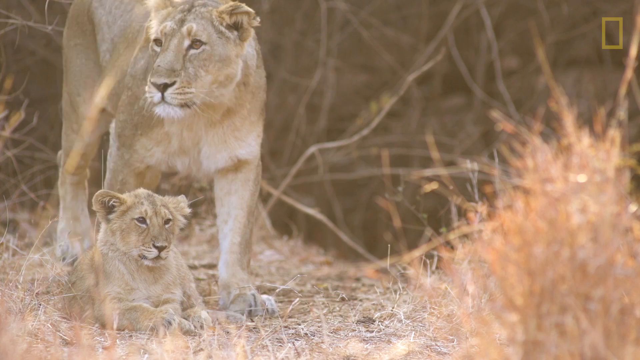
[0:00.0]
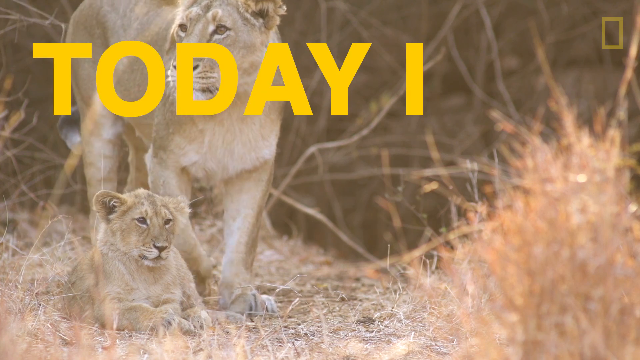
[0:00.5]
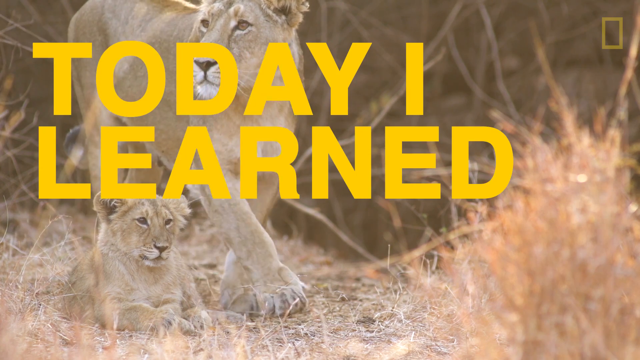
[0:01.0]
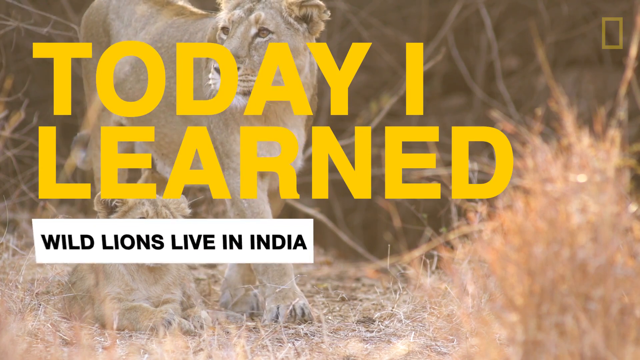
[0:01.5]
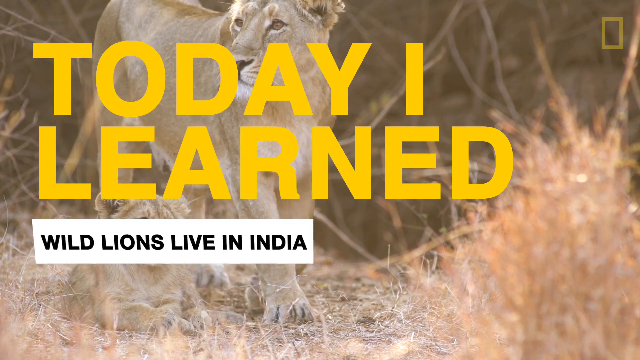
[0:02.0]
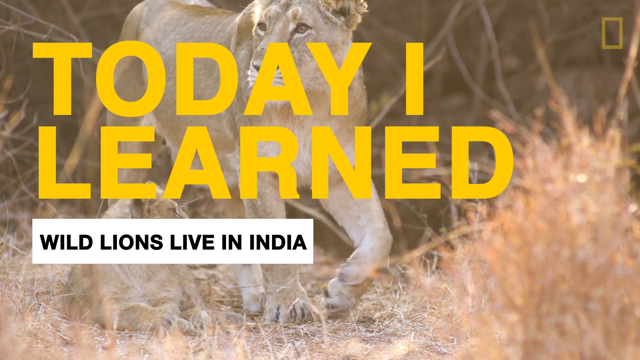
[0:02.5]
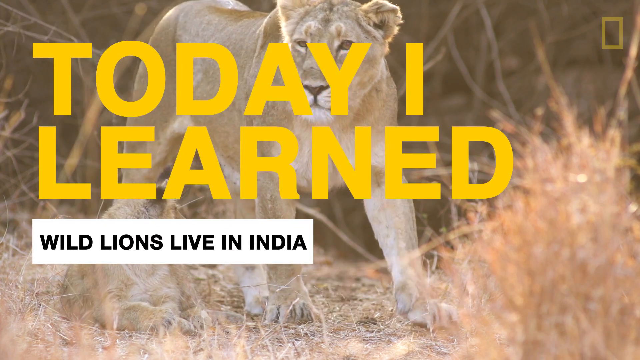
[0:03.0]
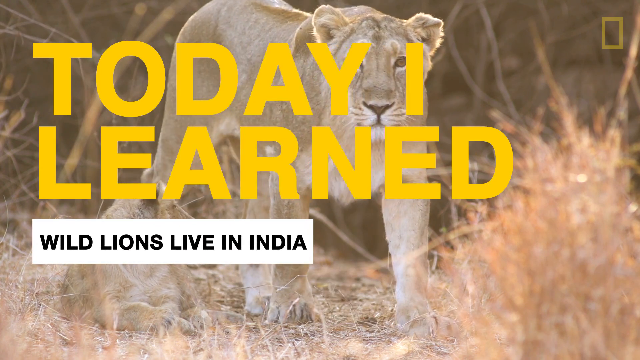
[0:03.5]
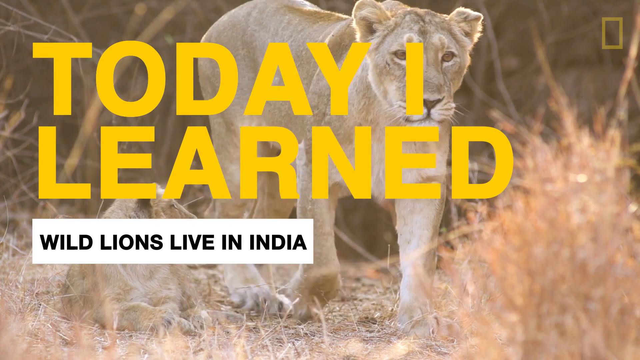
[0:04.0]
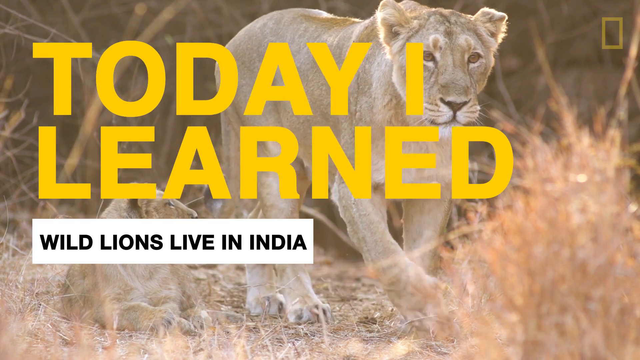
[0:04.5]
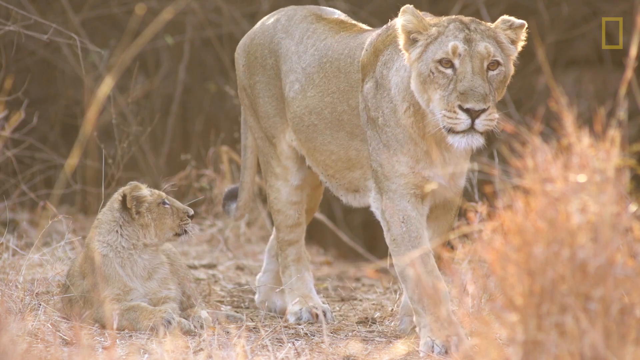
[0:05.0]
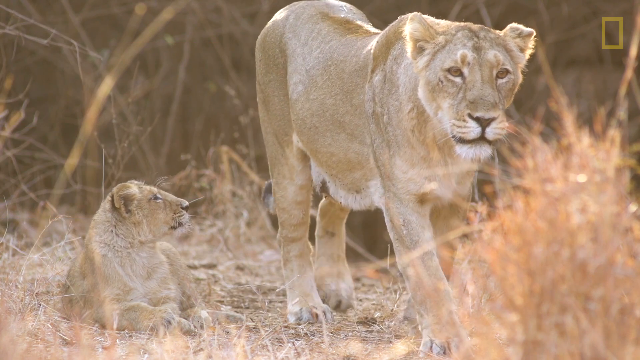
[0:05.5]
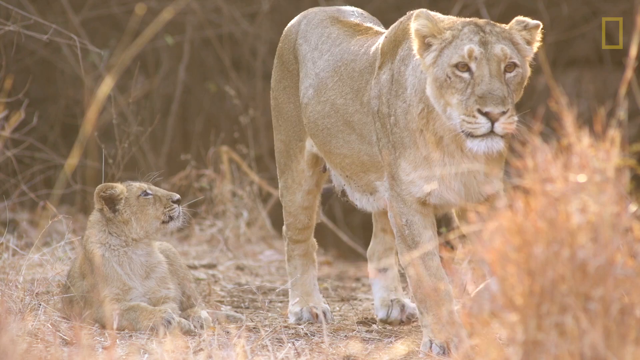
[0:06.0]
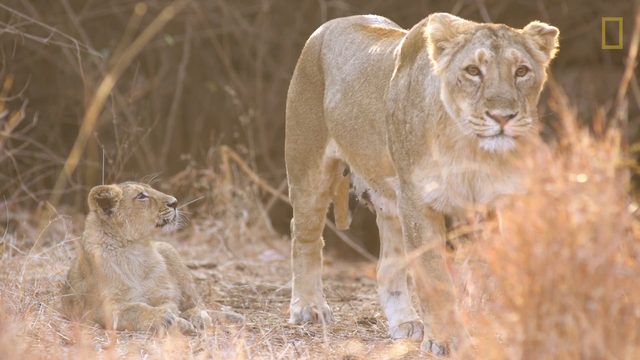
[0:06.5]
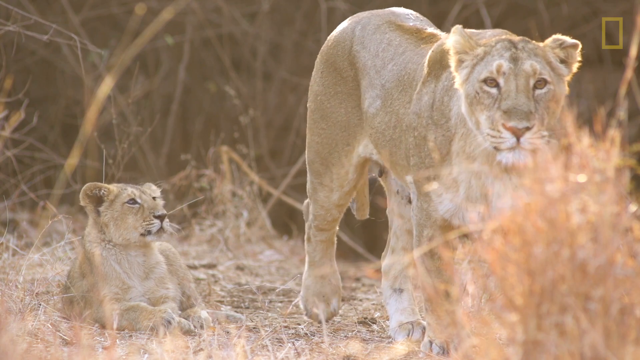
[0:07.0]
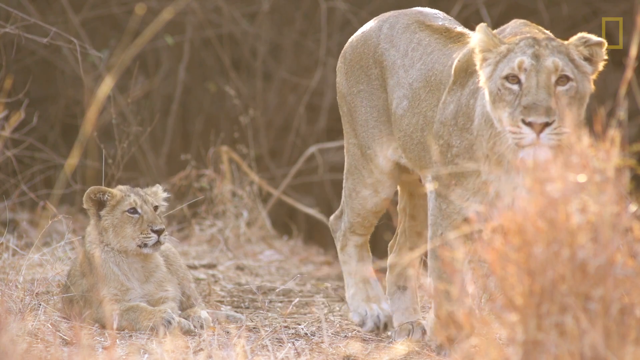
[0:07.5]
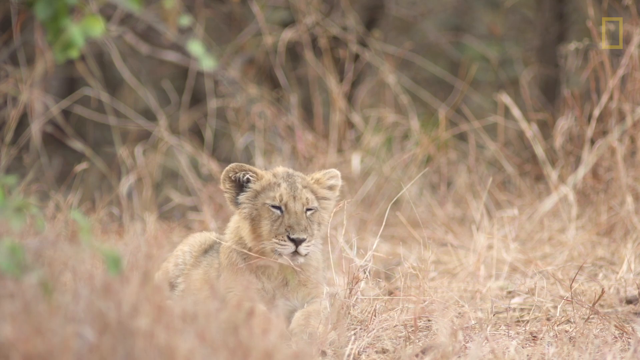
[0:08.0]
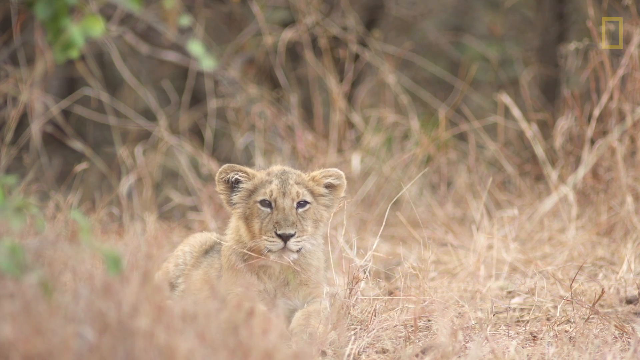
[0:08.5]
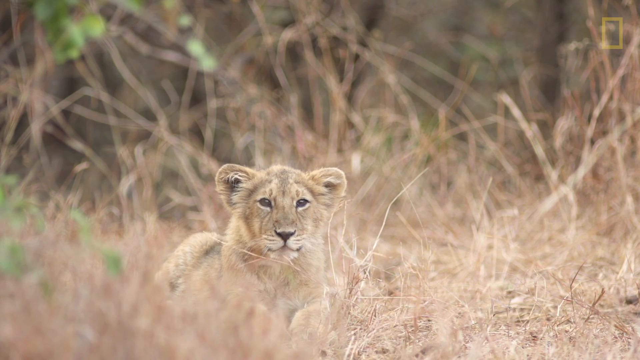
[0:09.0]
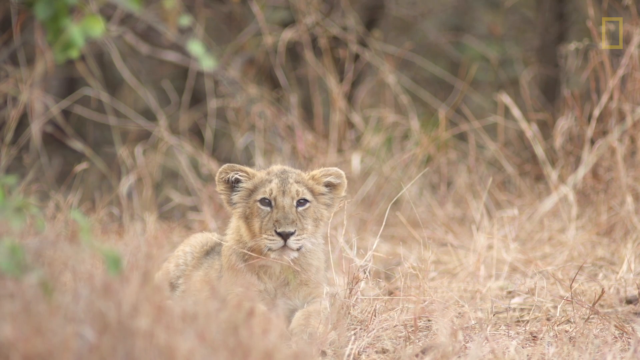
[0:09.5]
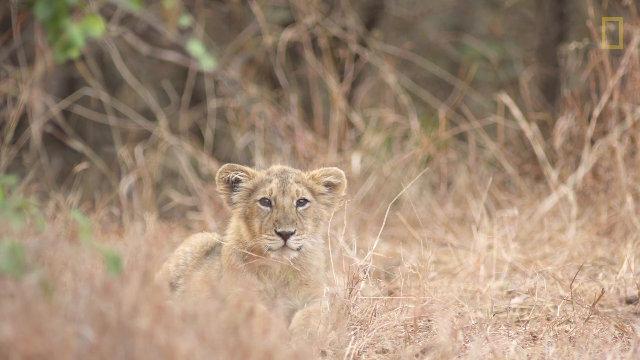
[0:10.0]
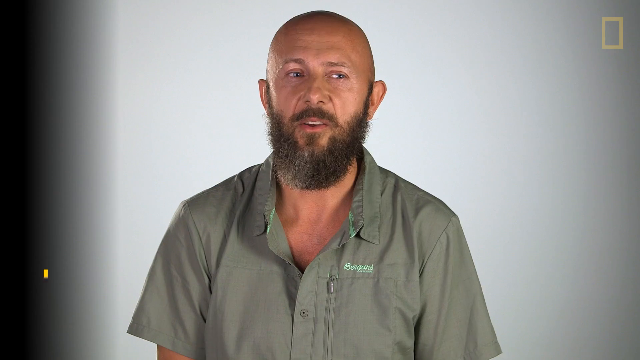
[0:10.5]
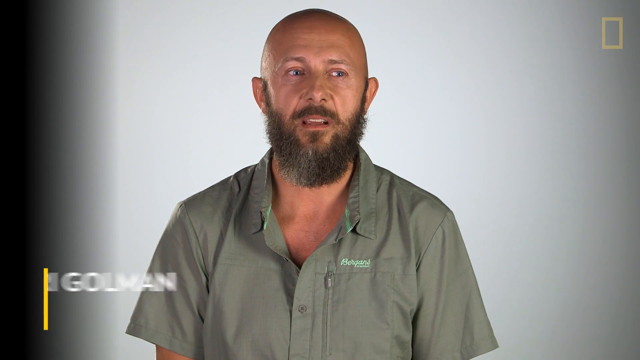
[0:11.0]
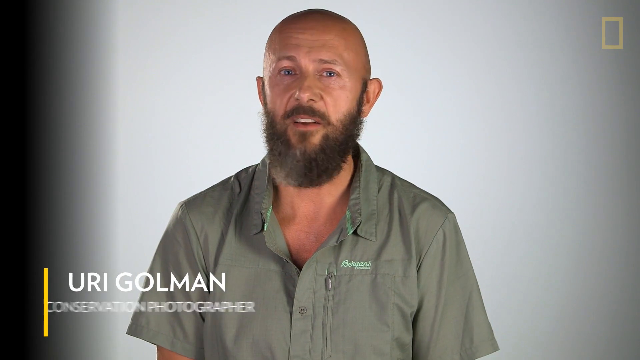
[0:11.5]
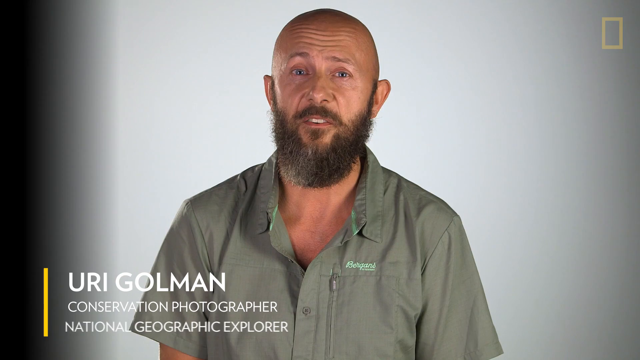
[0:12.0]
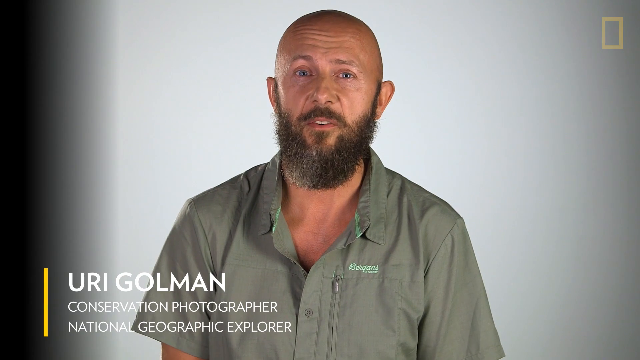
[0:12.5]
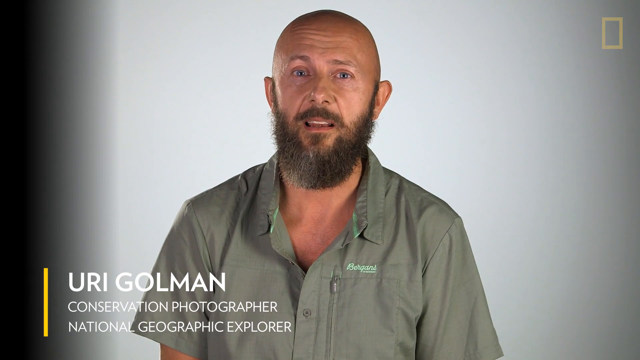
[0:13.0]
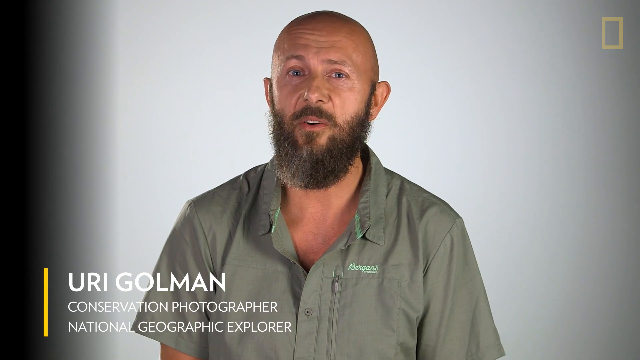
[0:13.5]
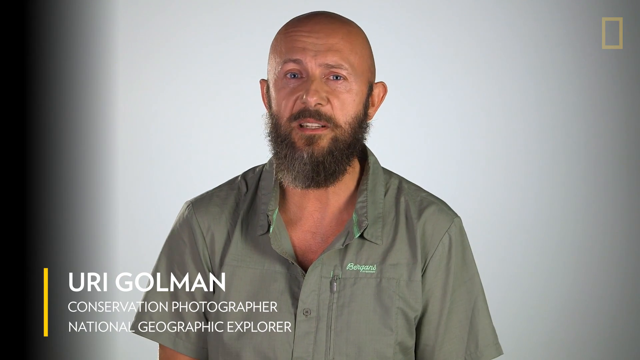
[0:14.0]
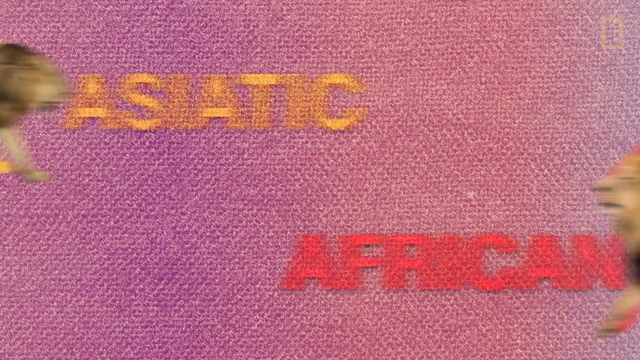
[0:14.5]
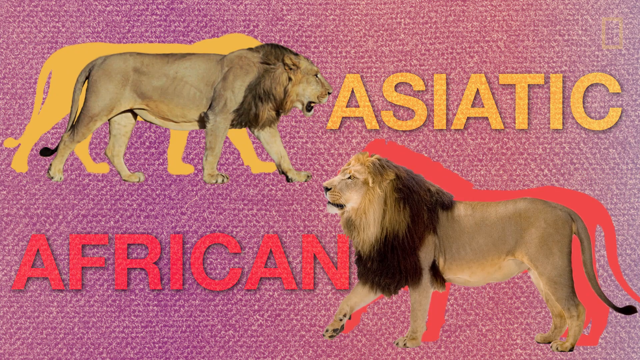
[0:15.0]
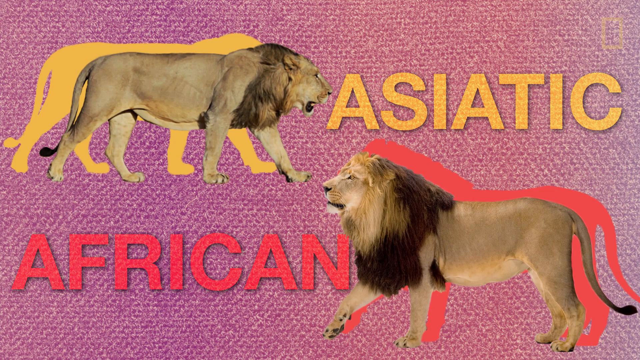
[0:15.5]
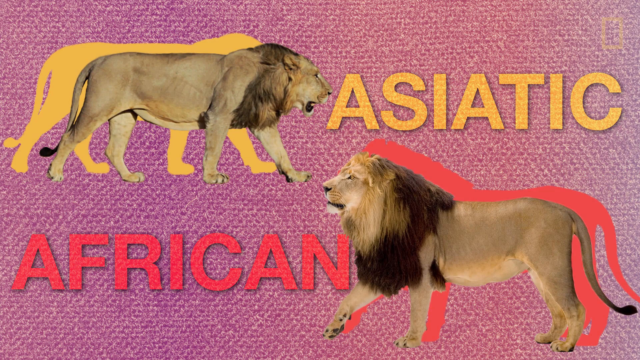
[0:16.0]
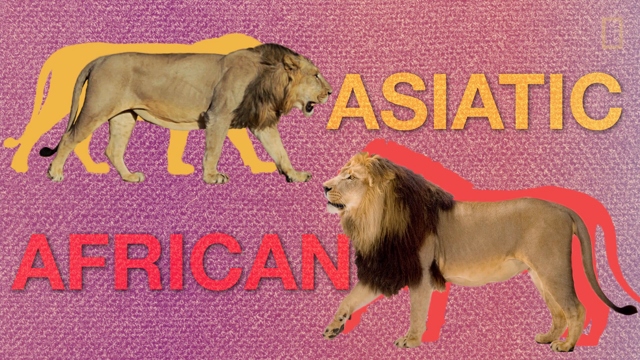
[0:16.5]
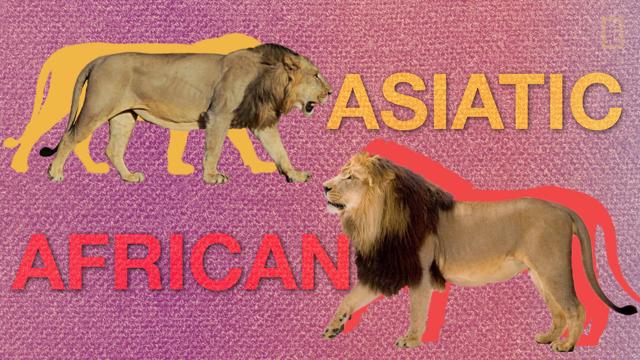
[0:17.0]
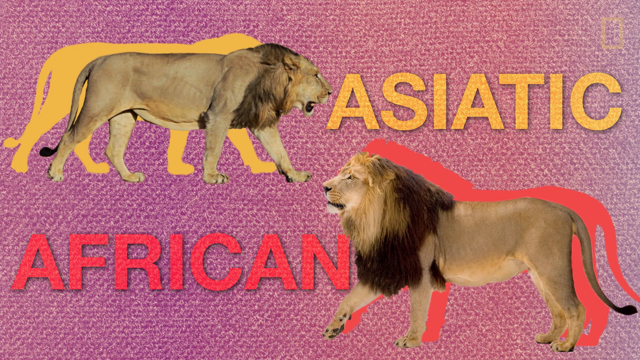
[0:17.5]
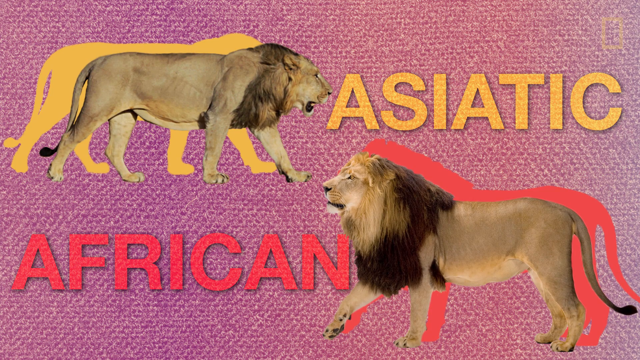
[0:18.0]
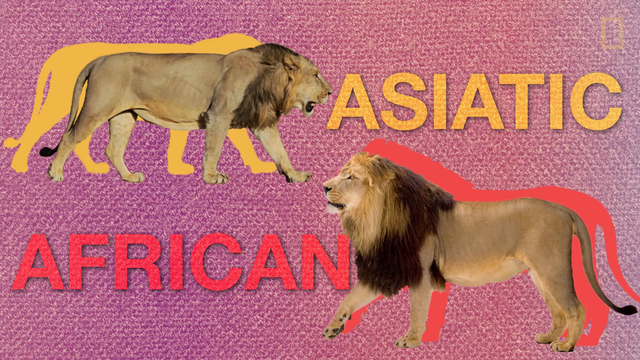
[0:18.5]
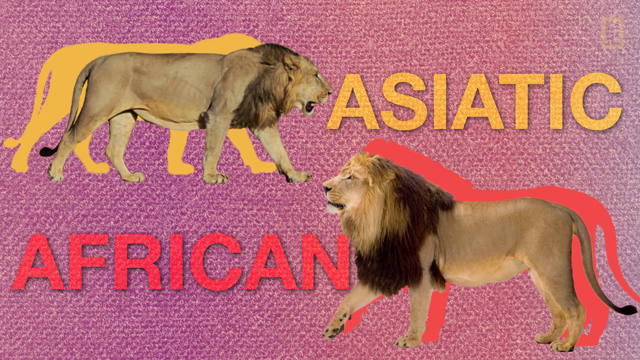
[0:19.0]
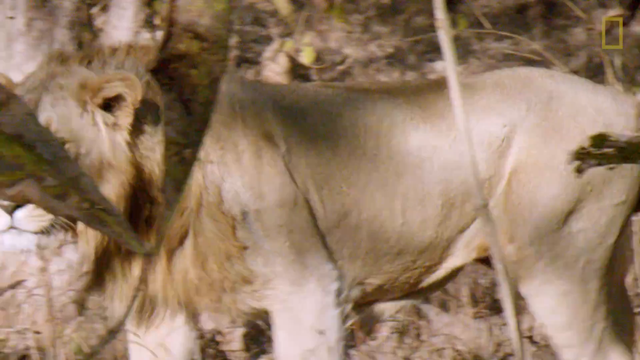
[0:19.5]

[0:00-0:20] Lions are shown in the wilderness, kind of in their natural habitat. On-screen text says "wild lions live in India." Two shots of the lions appear before a conservation photographer is seen talking. Then a kind of slide showing two lions appears, followed by a cut back to the lions. The sequence has several cuts and changes of scenery.